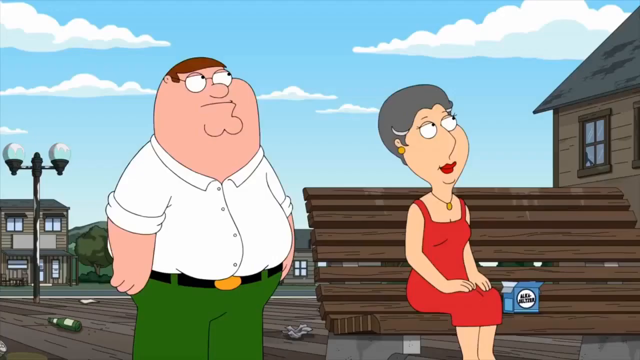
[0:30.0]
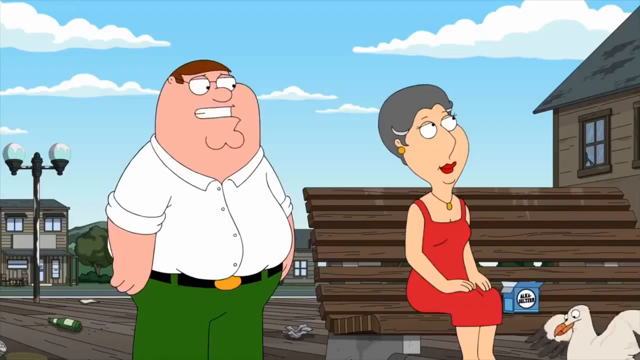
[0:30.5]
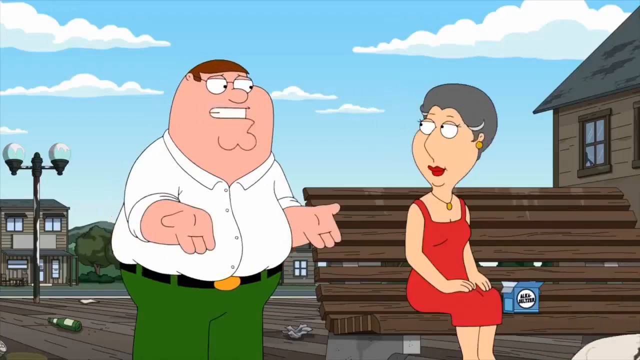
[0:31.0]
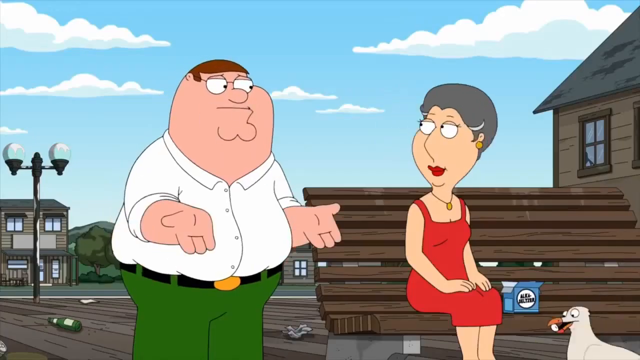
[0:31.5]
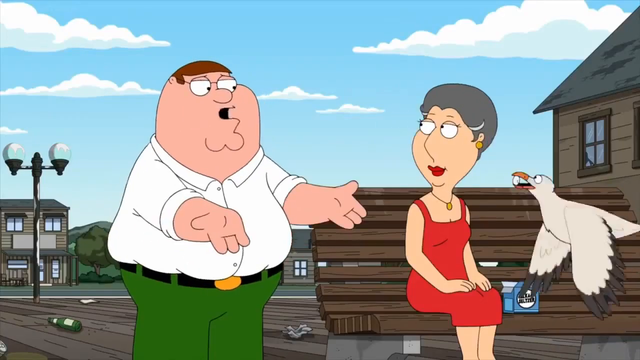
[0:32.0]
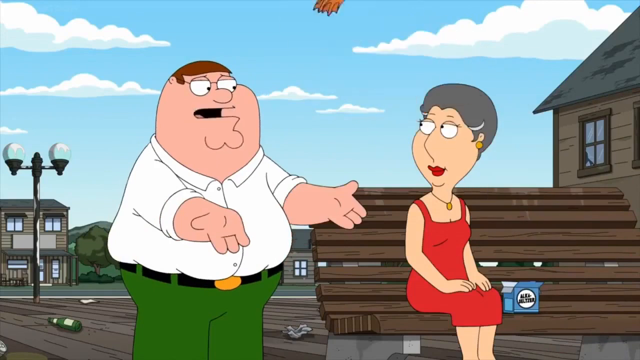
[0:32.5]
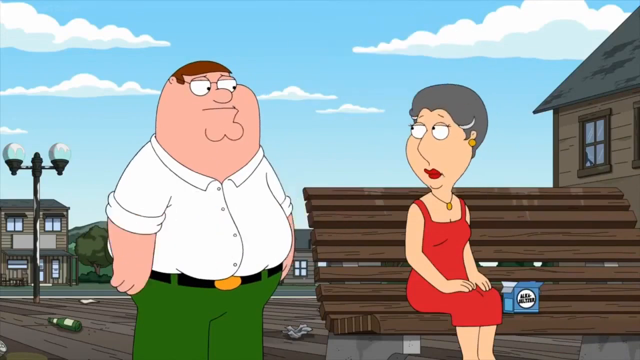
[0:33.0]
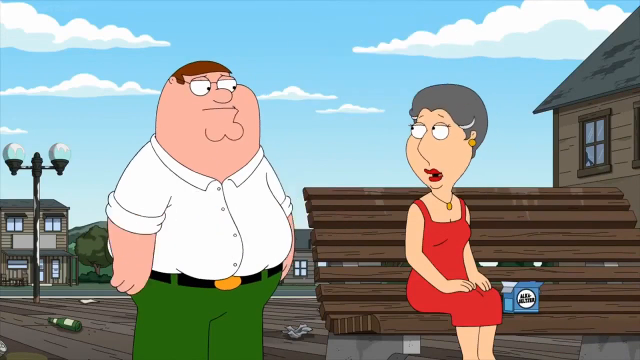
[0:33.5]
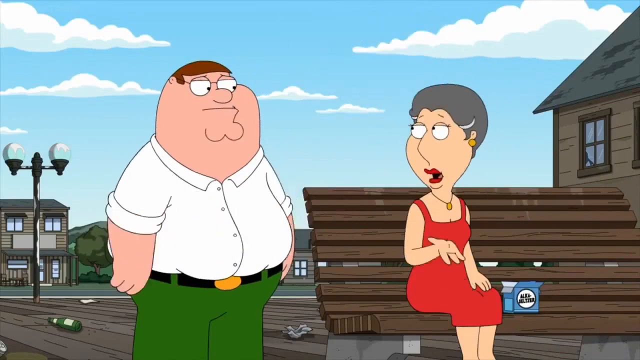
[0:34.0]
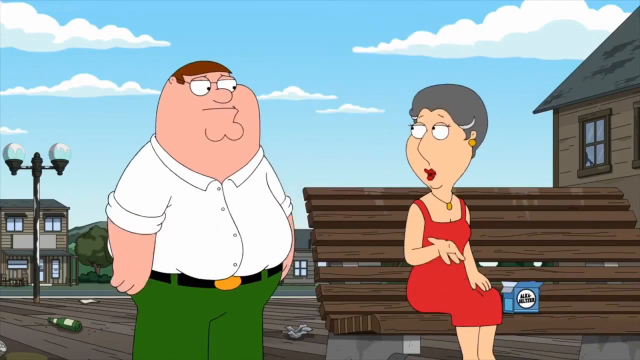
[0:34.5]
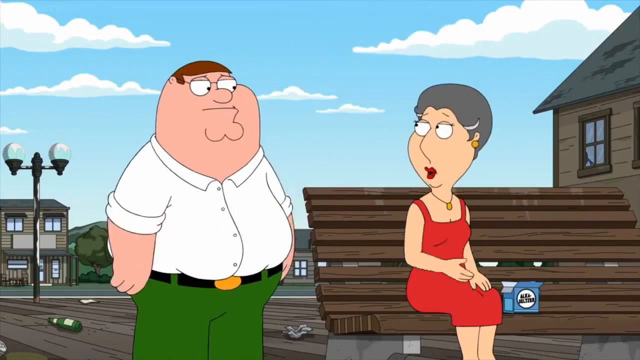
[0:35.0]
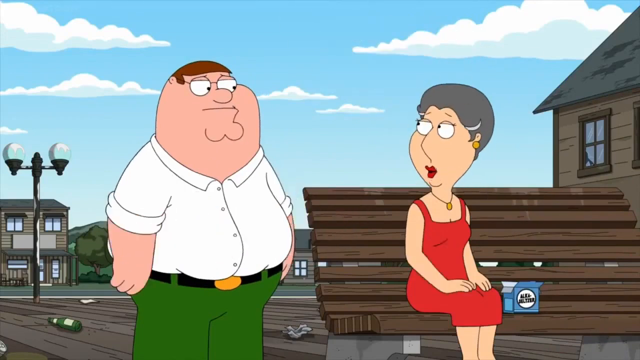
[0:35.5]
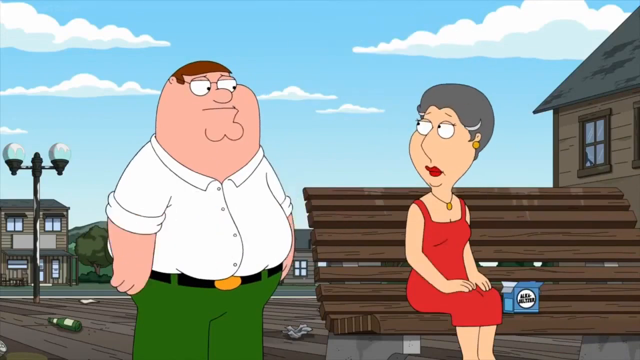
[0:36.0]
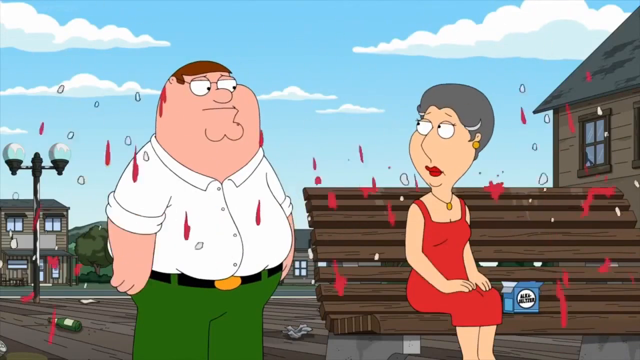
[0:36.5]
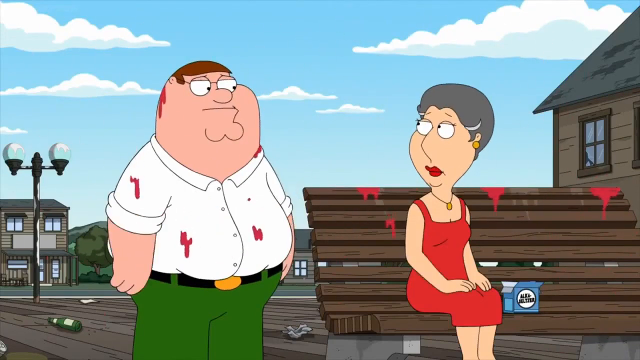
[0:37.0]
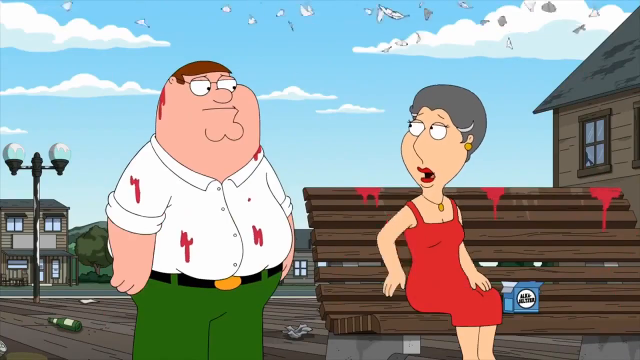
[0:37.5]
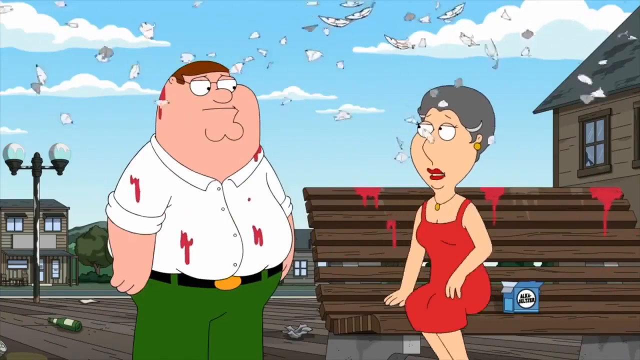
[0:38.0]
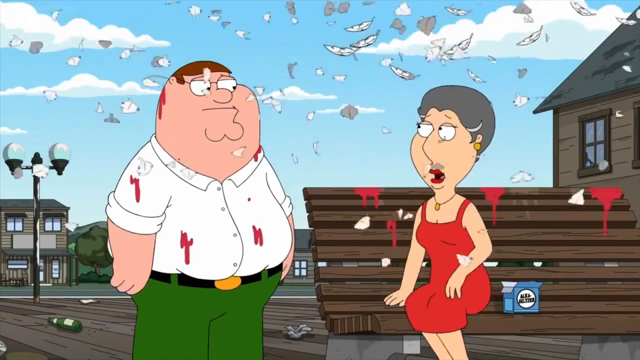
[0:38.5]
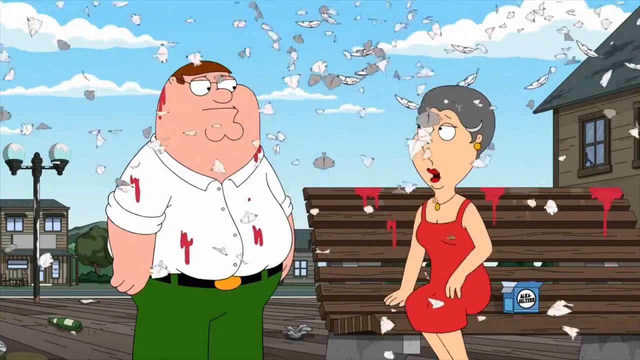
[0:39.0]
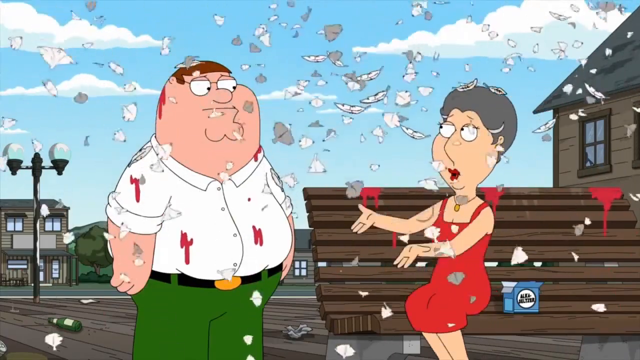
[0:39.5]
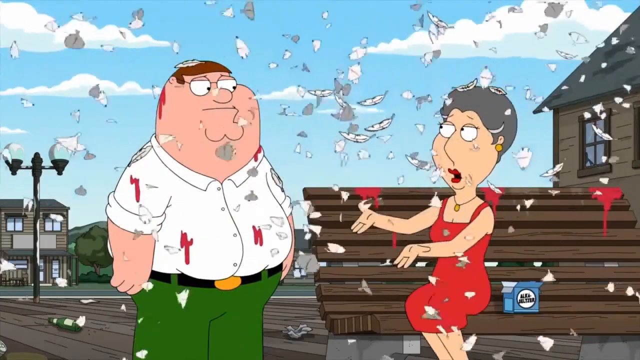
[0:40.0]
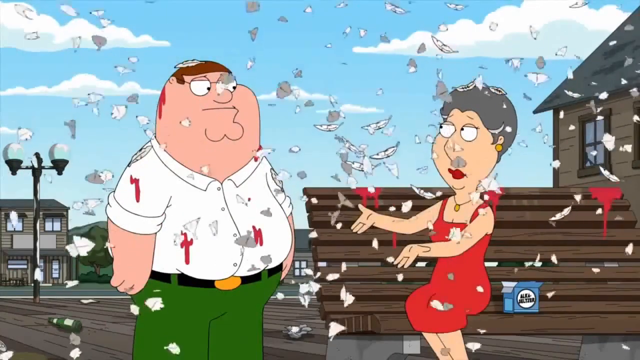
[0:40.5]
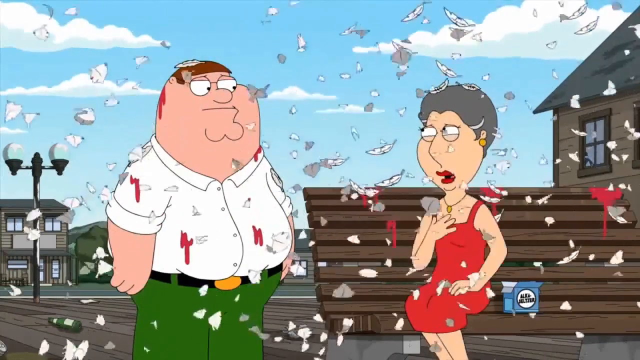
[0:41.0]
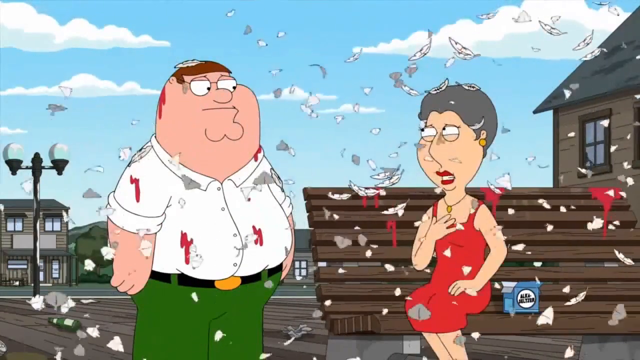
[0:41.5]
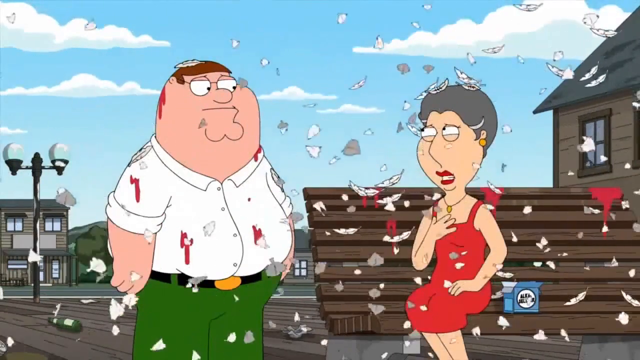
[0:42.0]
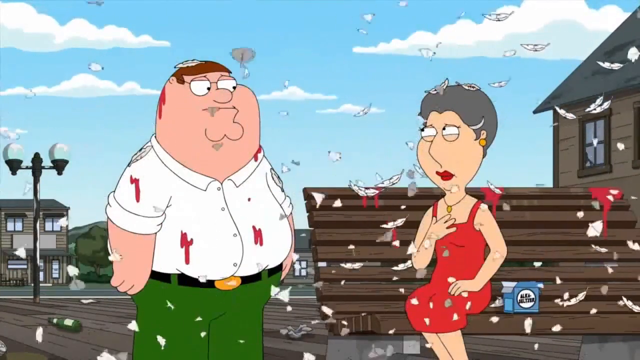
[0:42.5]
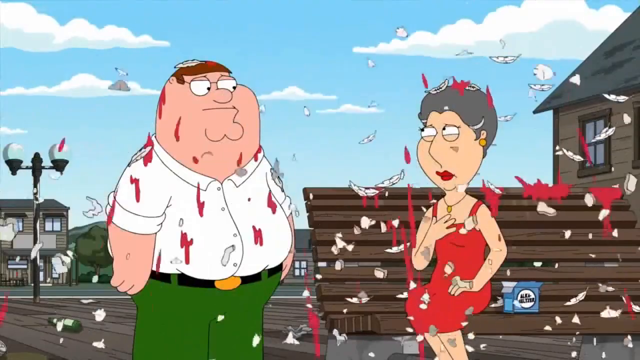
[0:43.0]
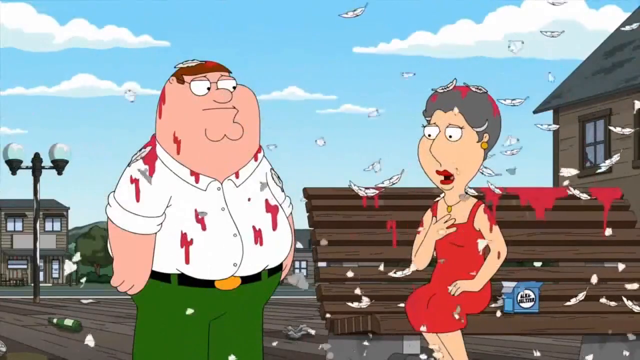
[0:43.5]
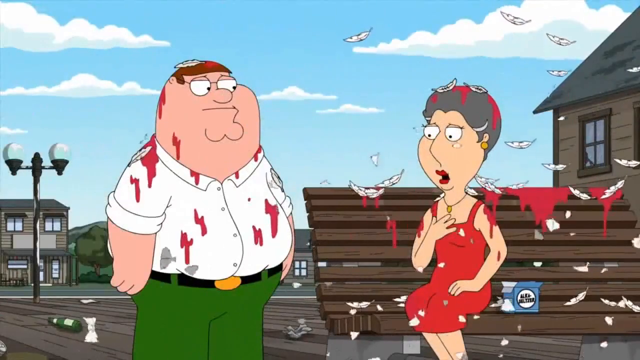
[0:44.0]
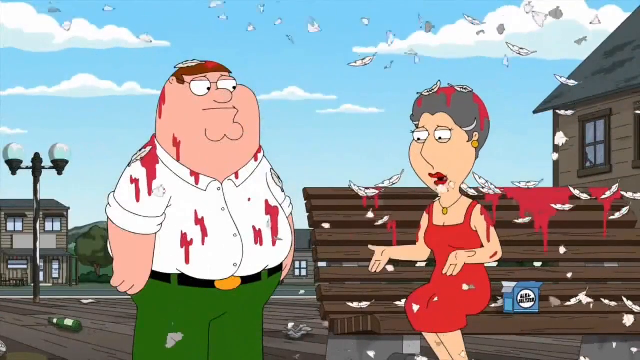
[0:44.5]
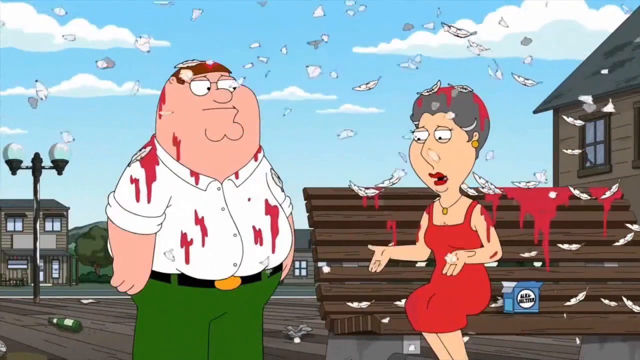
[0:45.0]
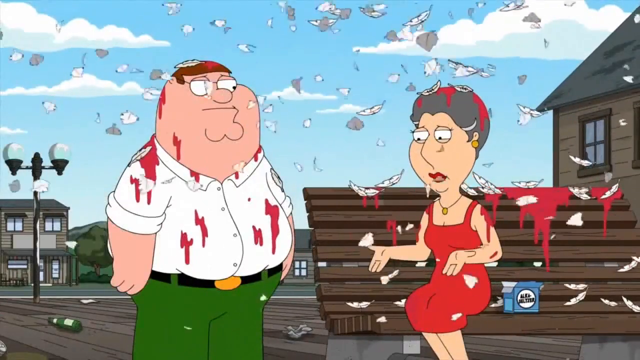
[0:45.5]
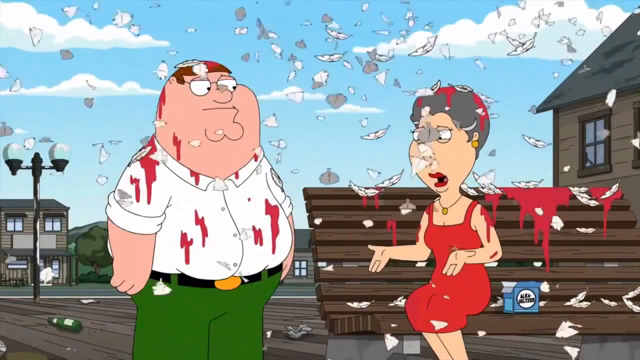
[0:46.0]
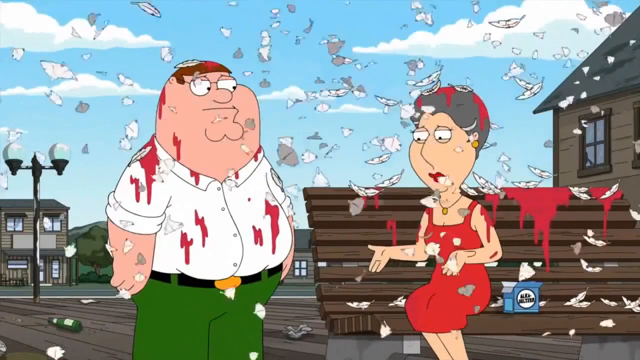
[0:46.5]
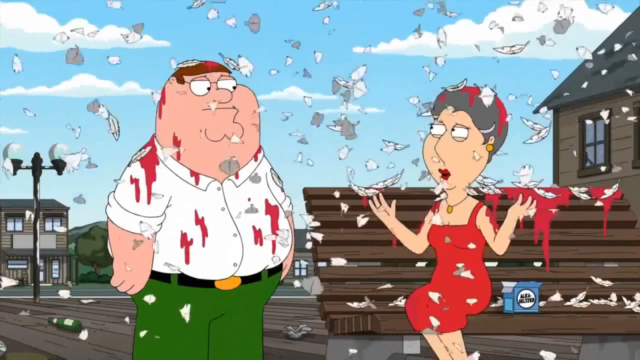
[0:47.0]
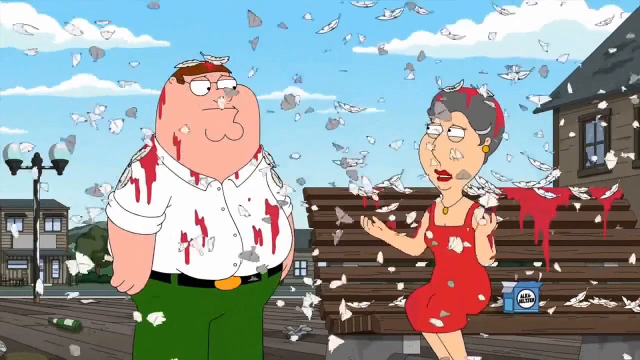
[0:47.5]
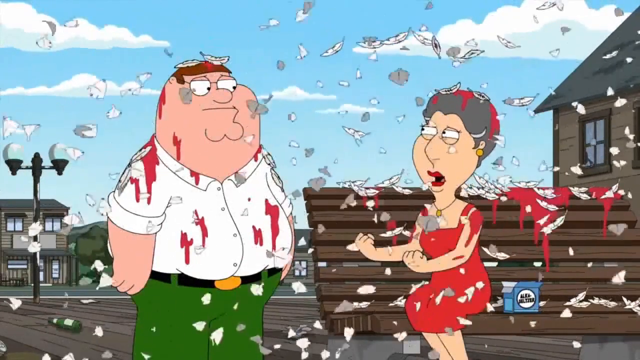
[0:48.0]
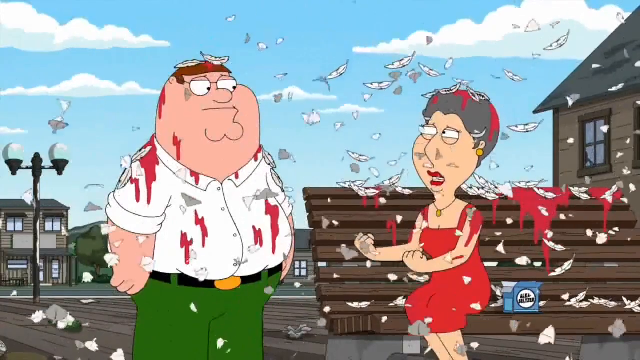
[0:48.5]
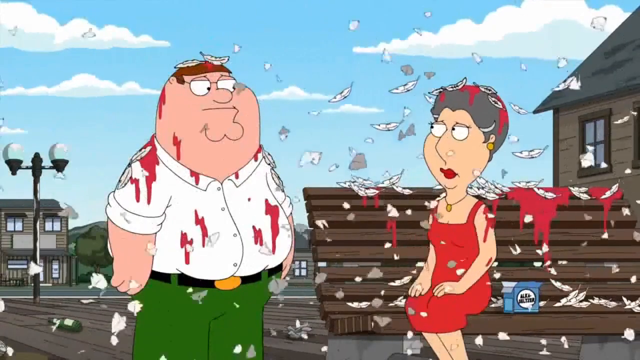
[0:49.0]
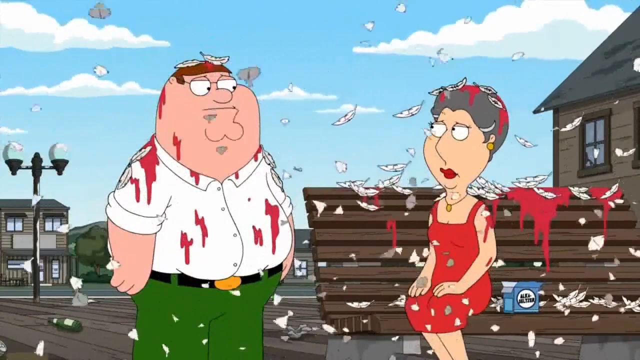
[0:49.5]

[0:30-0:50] In a cartoonish scene, a heavyset, oversized man is talking to a woman on the bench. The man and woman are arguing when a bird flies up into the sky. Suddenly something spills down on him, something red almost like paint, and feathers fall from the sky. What hit the bird is not shown, but apparently a bird has been killed and the red is blood. It lands on the man's head and shirt and on the woman's head and clothes, while feathers keep falling from the sky.